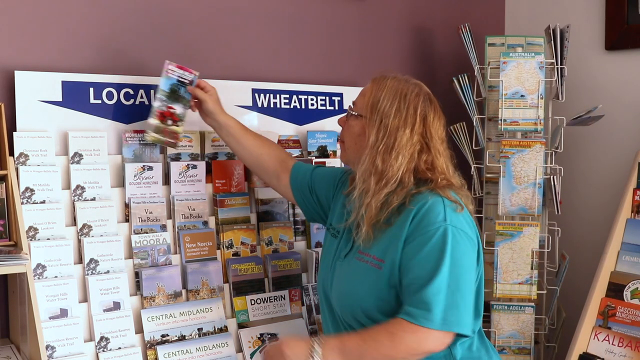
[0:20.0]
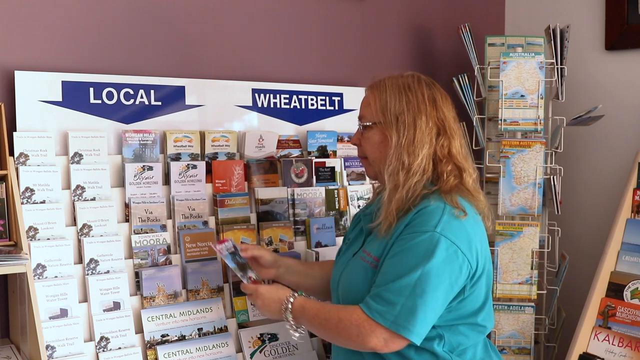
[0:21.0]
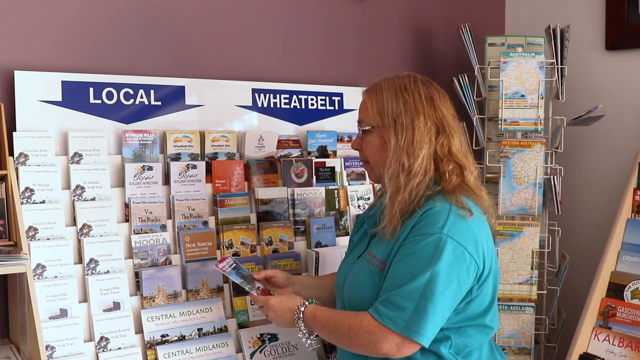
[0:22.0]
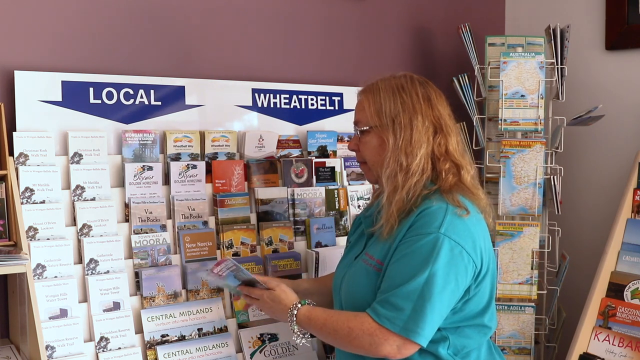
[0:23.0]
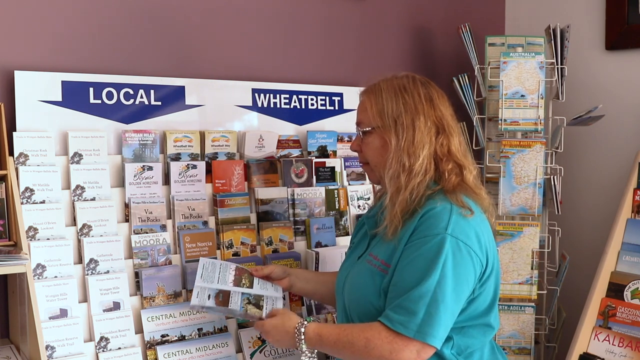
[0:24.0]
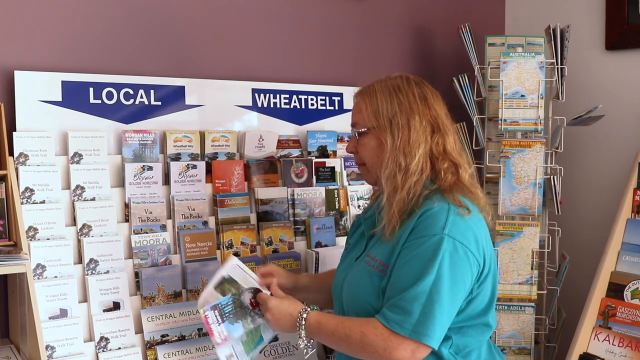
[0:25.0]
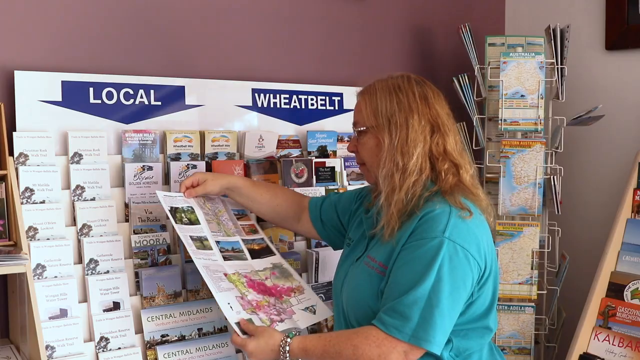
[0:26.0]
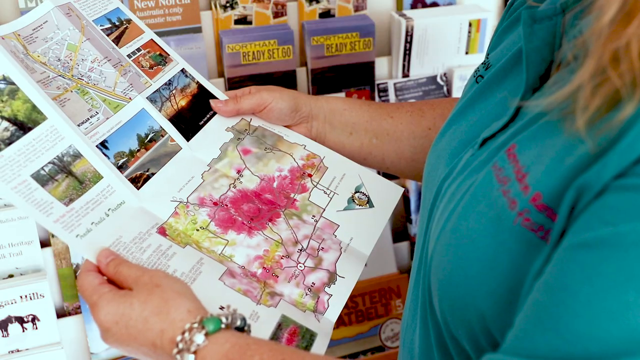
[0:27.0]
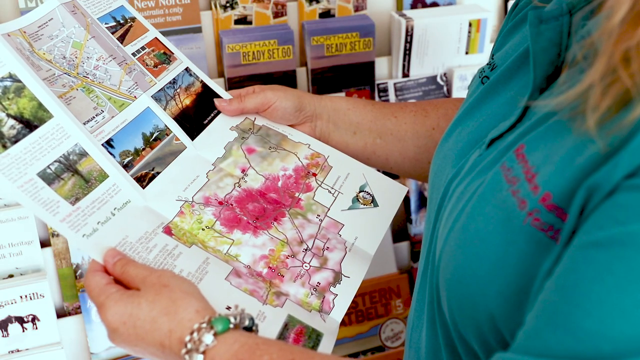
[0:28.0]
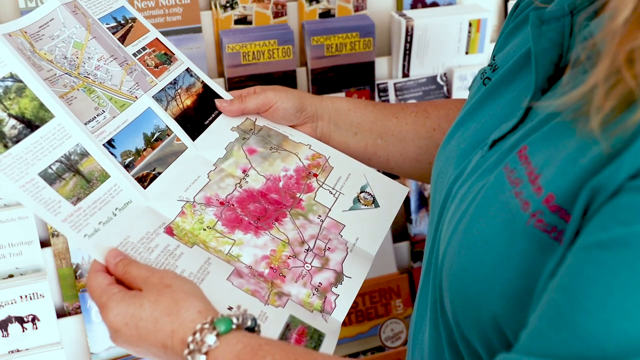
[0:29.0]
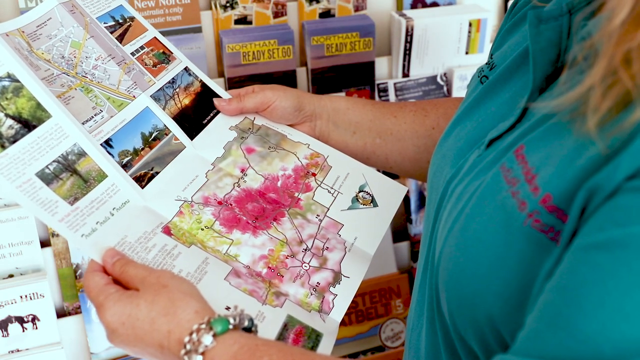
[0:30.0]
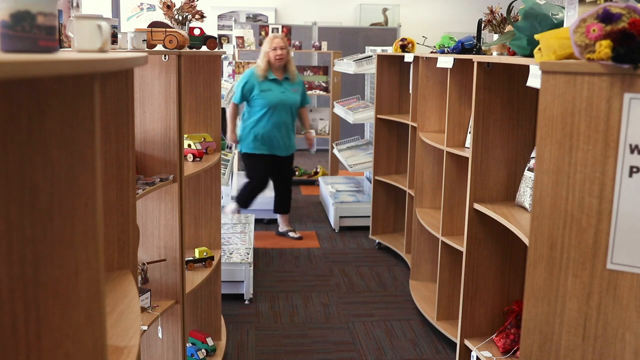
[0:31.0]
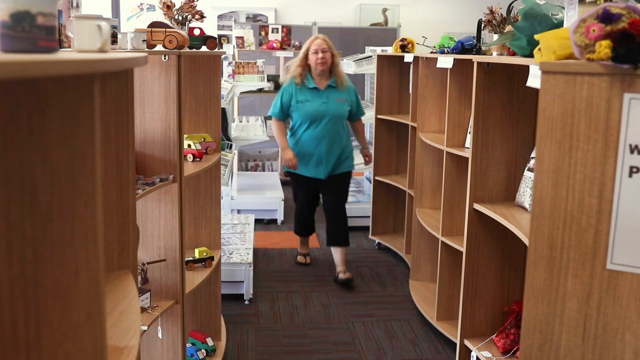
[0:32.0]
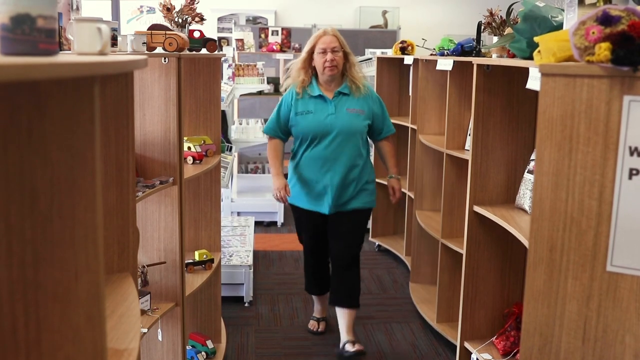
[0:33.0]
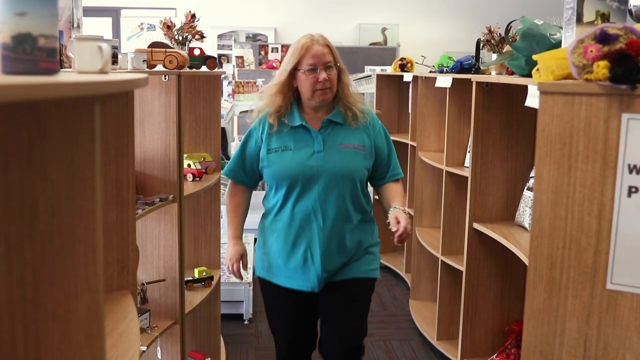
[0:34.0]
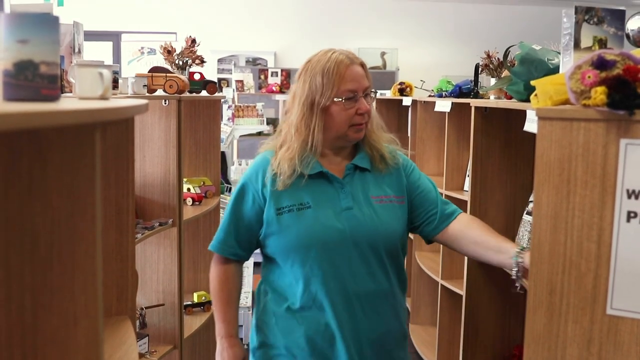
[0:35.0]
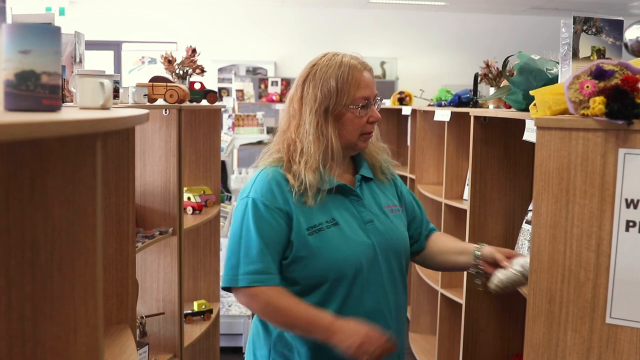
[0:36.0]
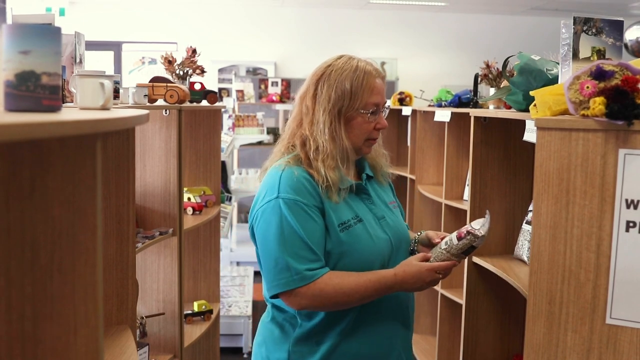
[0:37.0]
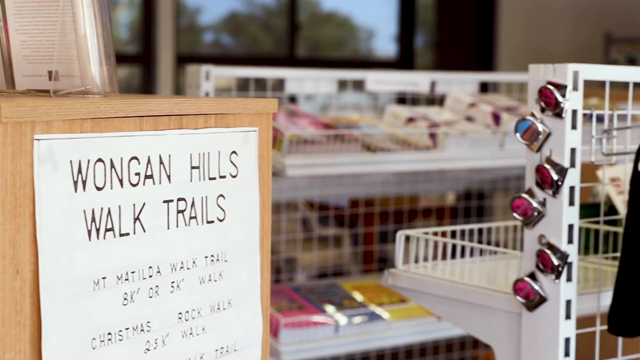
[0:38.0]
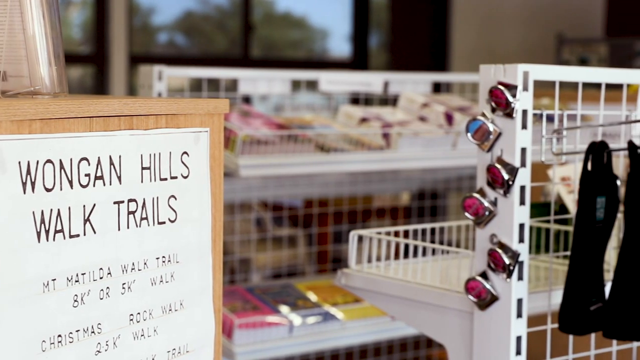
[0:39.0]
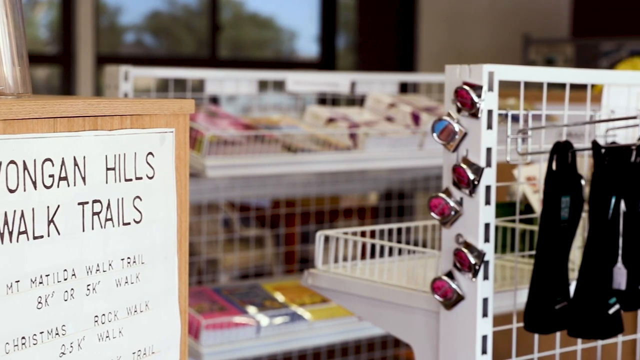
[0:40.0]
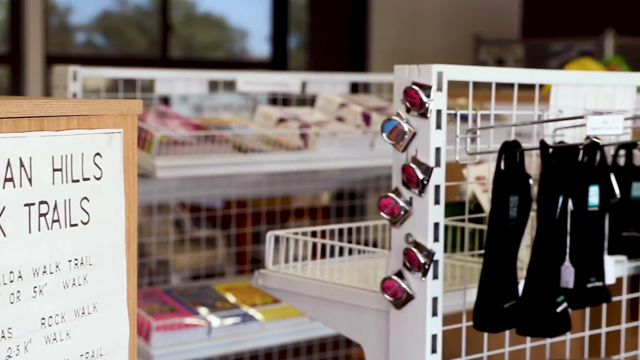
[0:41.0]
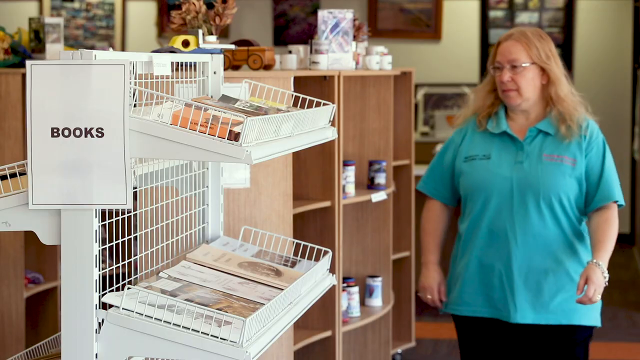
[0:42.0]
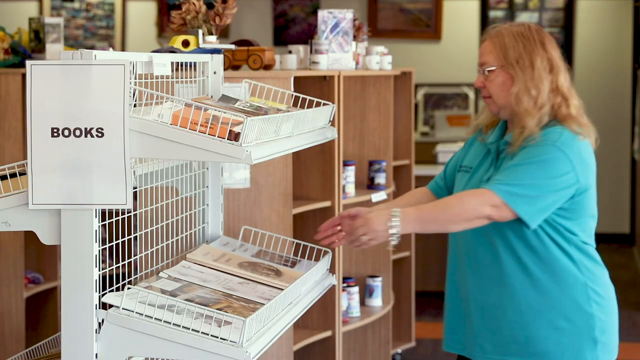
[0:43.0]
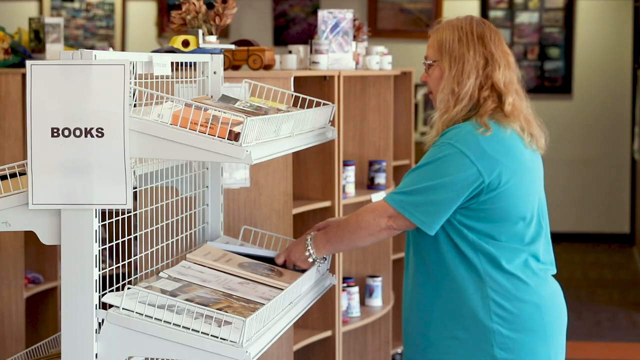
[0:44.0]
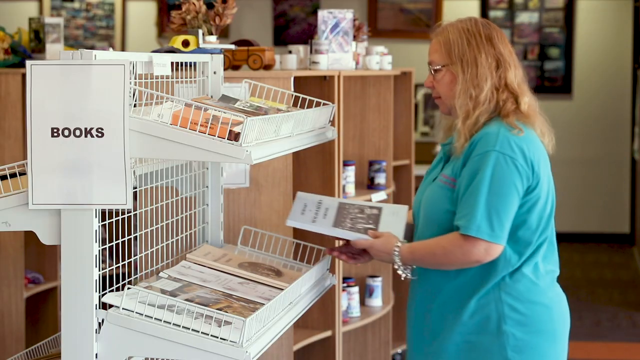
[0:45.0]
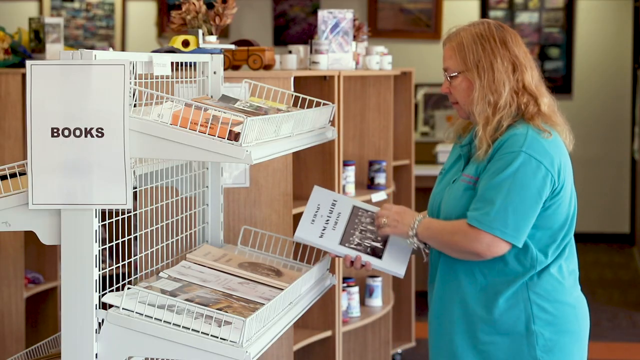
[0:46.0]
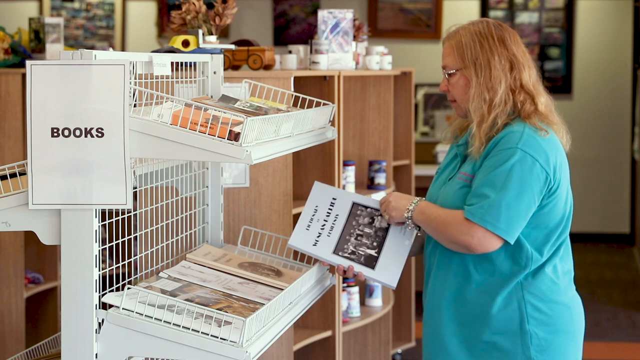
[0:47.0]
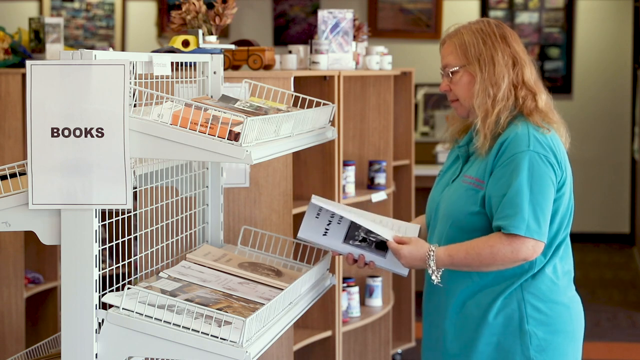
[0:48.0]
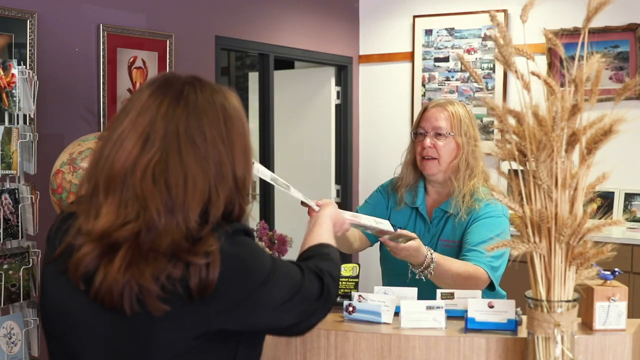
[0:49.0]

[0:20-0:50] The same woman at the brochure rack pulls a brochure down, unfolds it and looks at a map, which is a very bright pink. She walks through what may be a gift shop, stops at one of the shelves and picks up some kind of package that almost looks like confetti. A sign reads "Wongan Hills Walk Trails". In another scene she walks to another shelf and picks up a book. Finally, she stands at a counter, apparently the gift shop's cashier station, handing a brochure or a map across the counter to another woman who is seen only from behind and is apparently middle-aged.